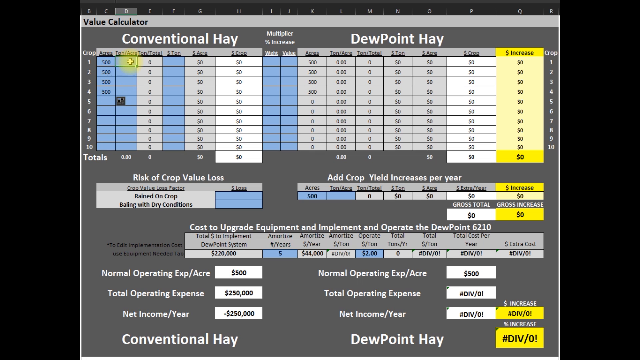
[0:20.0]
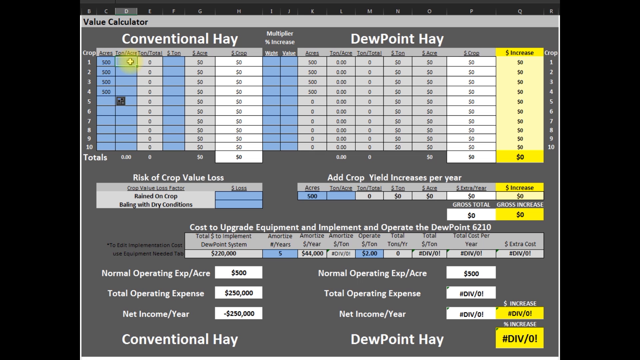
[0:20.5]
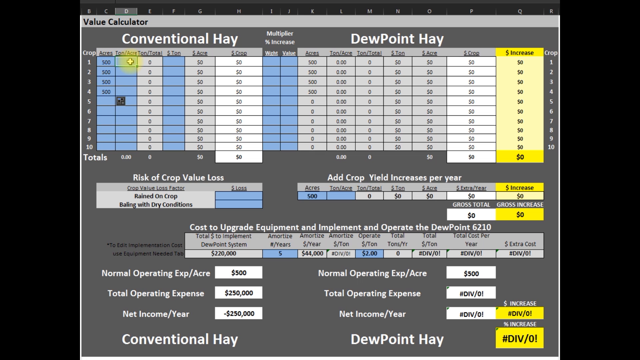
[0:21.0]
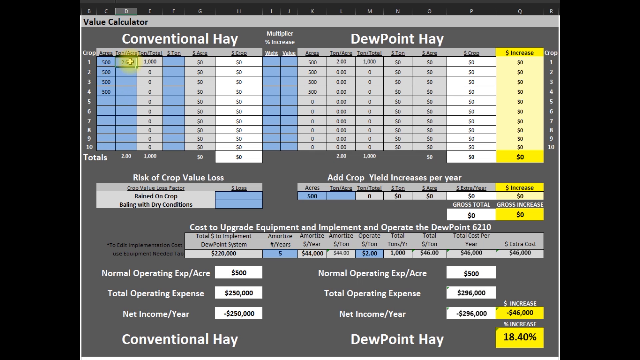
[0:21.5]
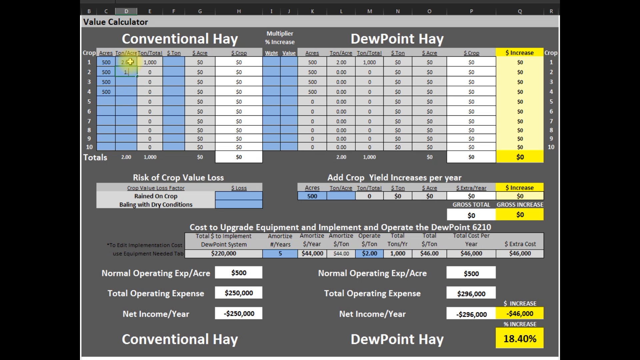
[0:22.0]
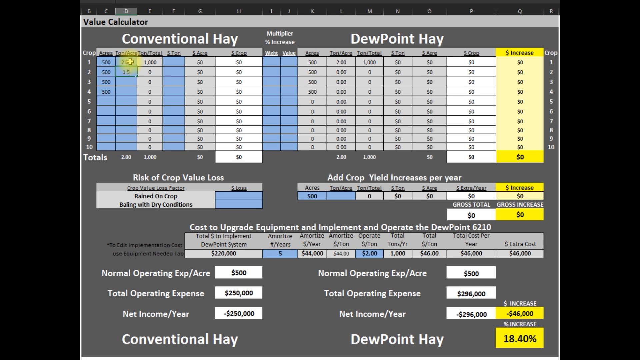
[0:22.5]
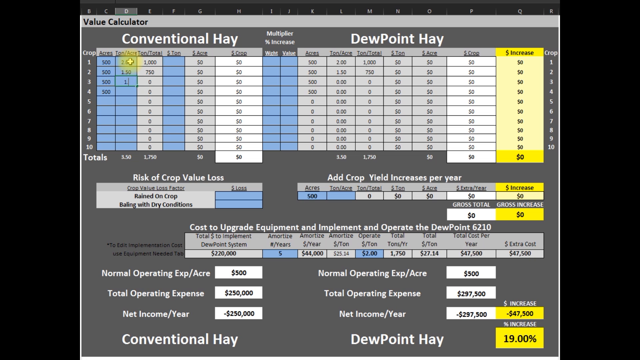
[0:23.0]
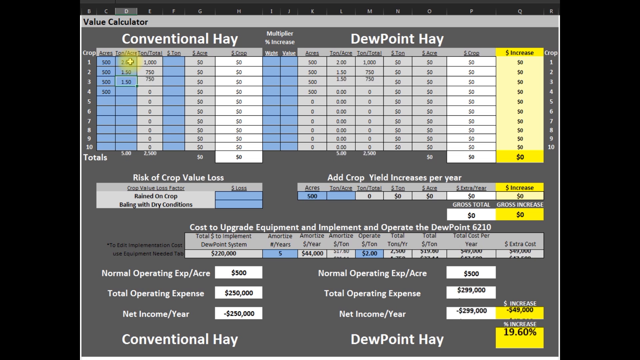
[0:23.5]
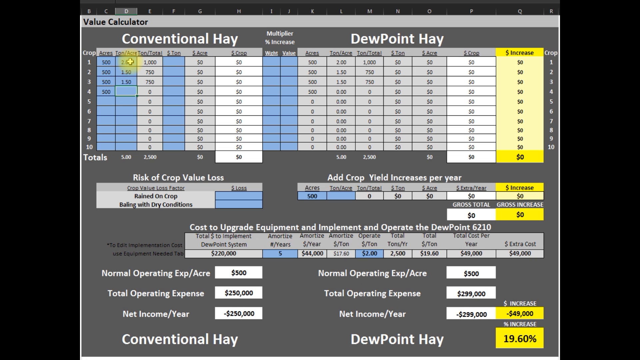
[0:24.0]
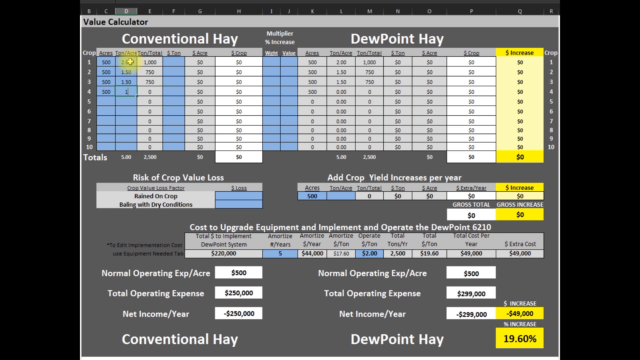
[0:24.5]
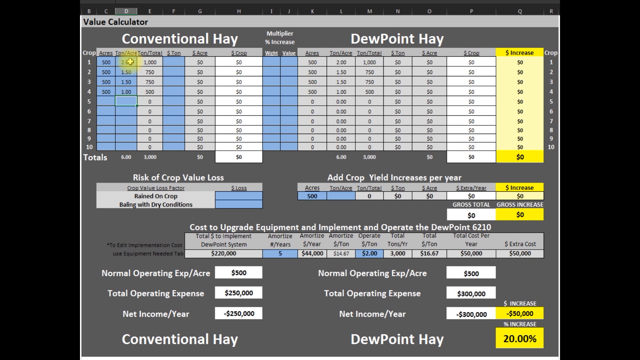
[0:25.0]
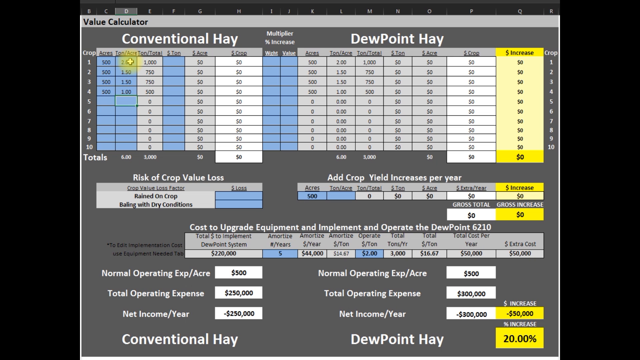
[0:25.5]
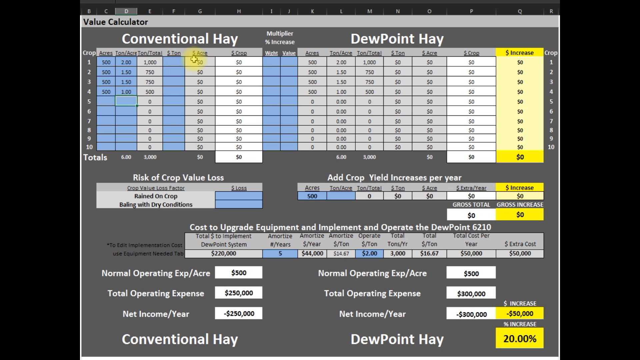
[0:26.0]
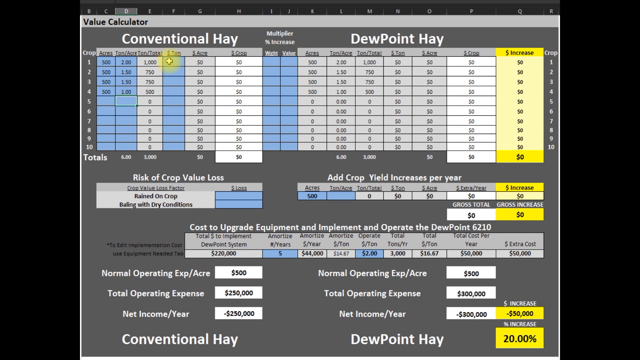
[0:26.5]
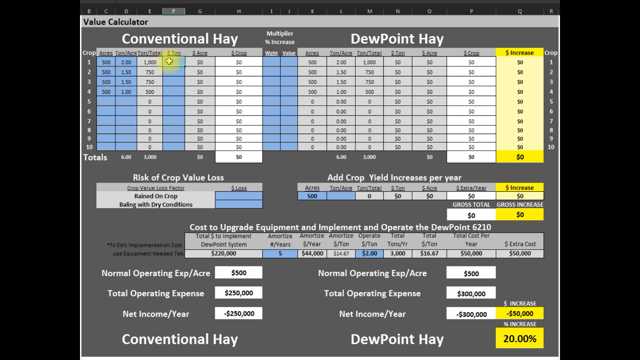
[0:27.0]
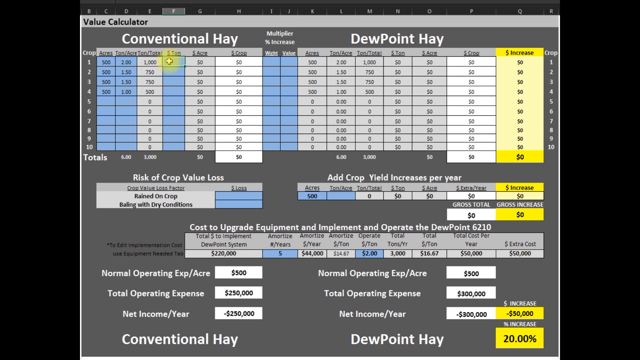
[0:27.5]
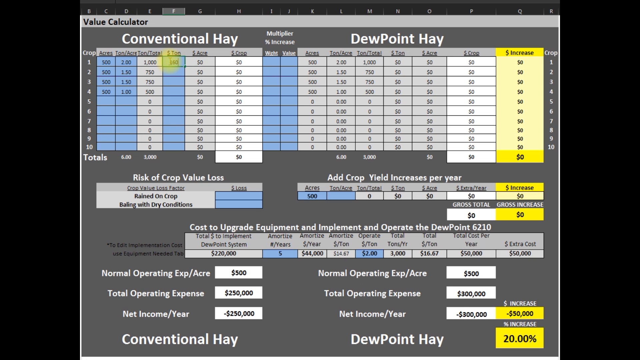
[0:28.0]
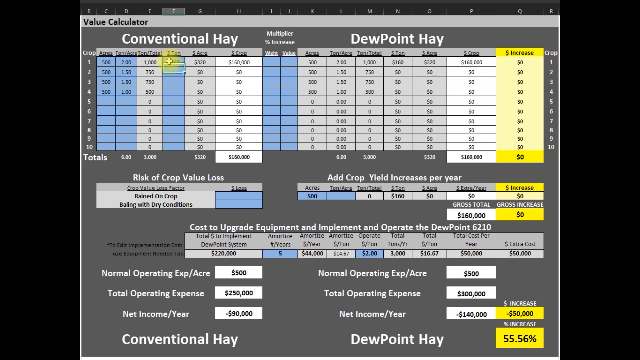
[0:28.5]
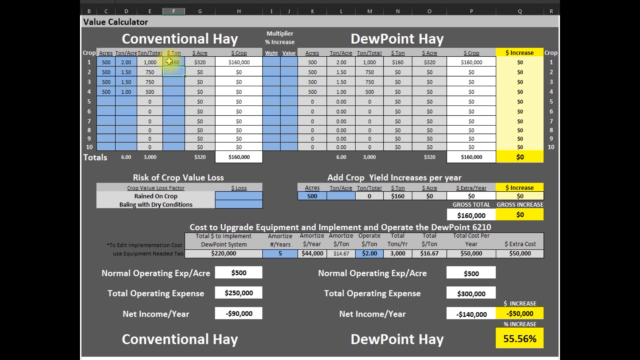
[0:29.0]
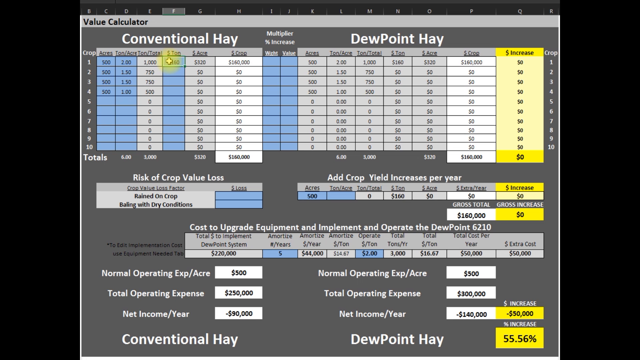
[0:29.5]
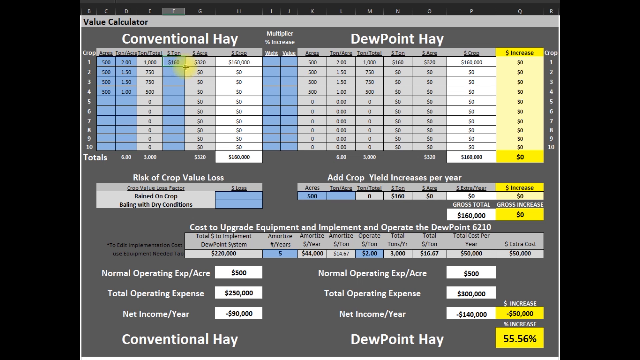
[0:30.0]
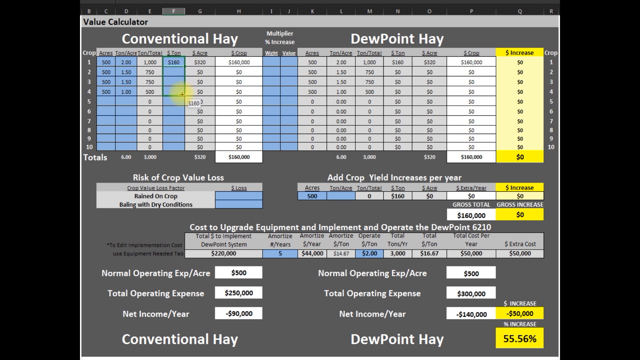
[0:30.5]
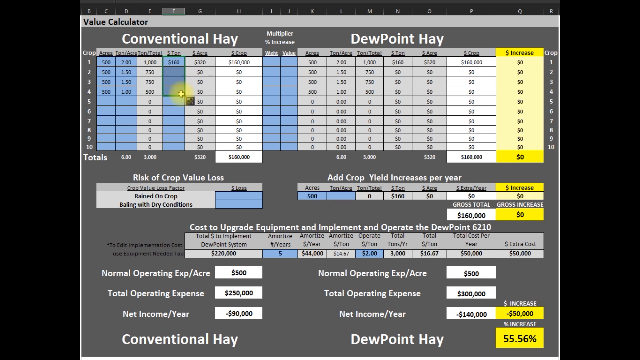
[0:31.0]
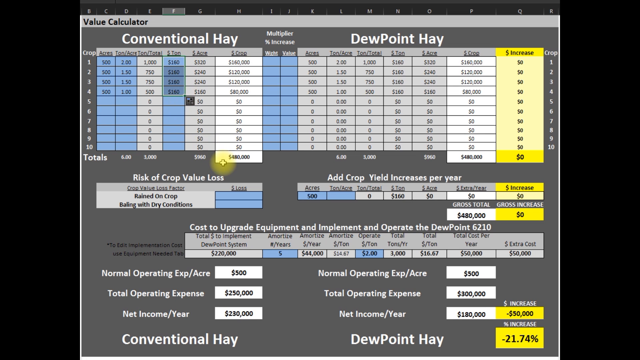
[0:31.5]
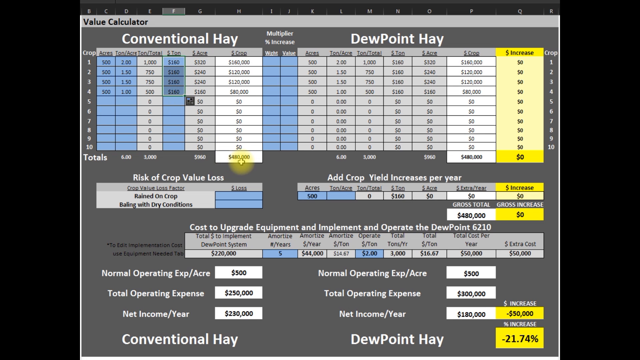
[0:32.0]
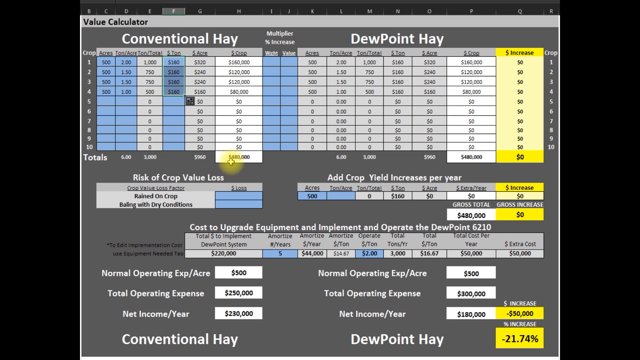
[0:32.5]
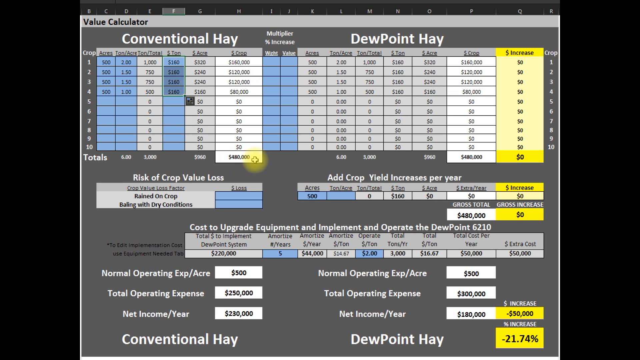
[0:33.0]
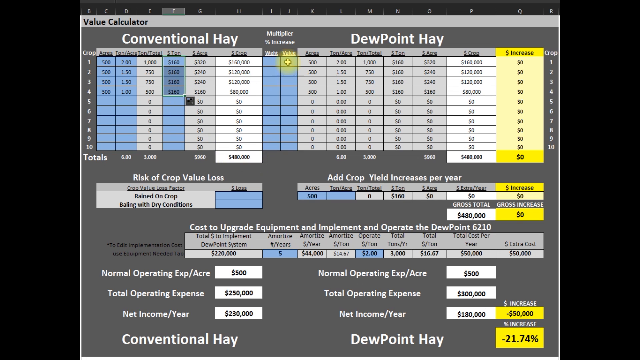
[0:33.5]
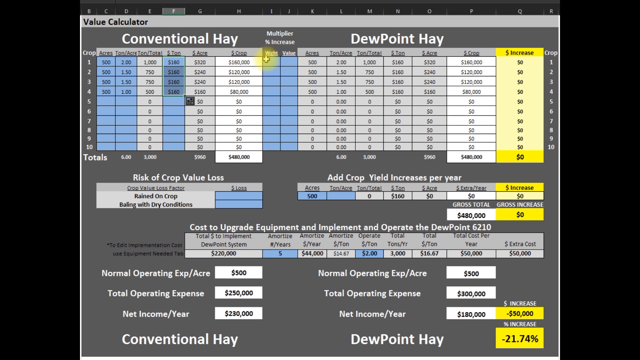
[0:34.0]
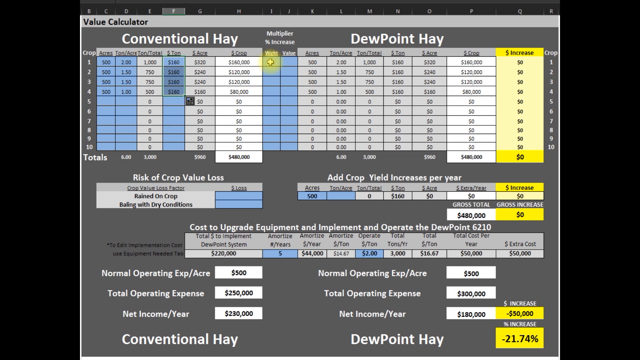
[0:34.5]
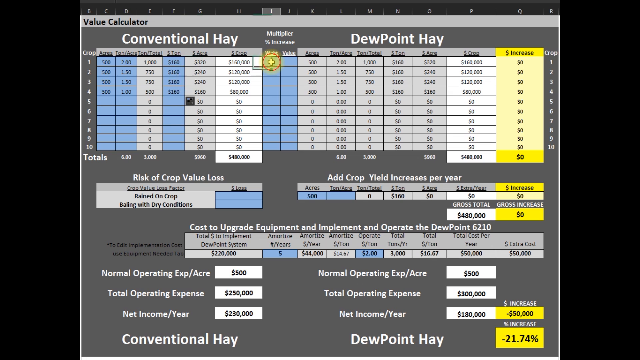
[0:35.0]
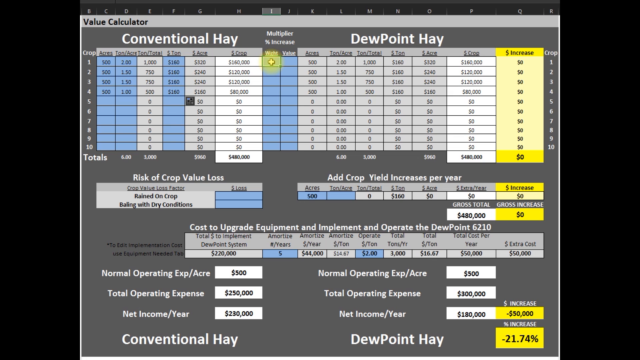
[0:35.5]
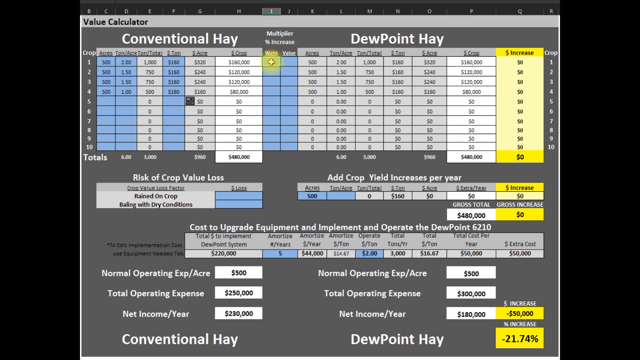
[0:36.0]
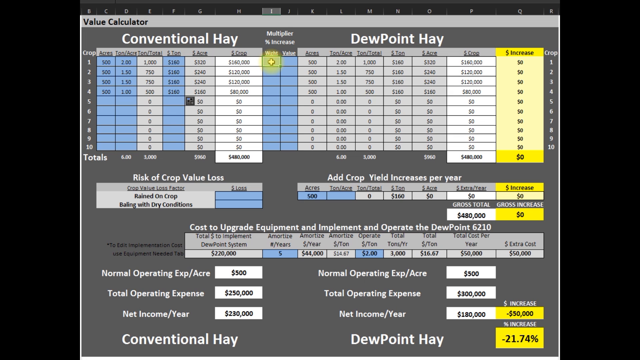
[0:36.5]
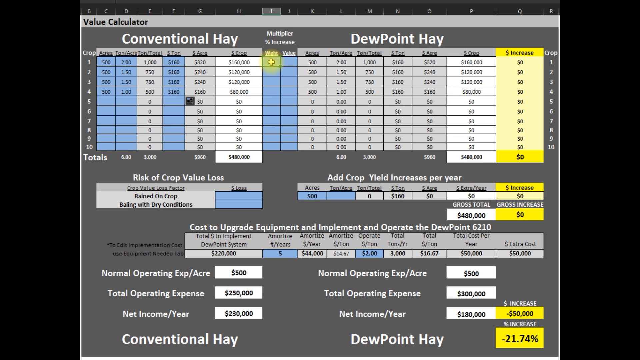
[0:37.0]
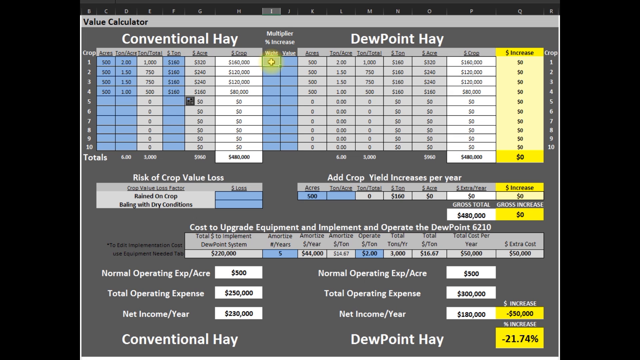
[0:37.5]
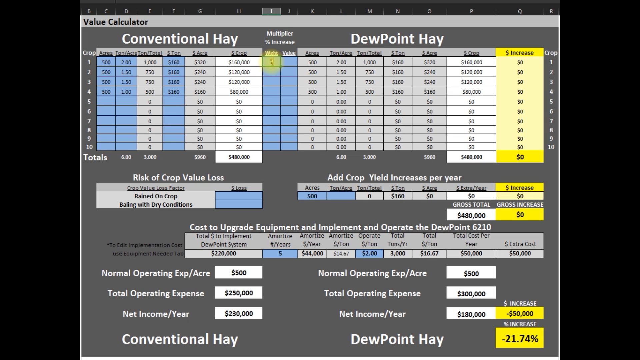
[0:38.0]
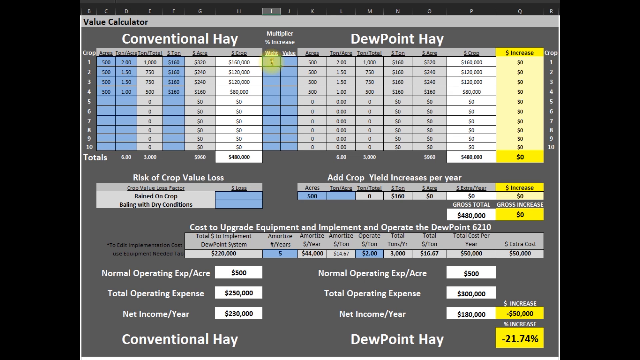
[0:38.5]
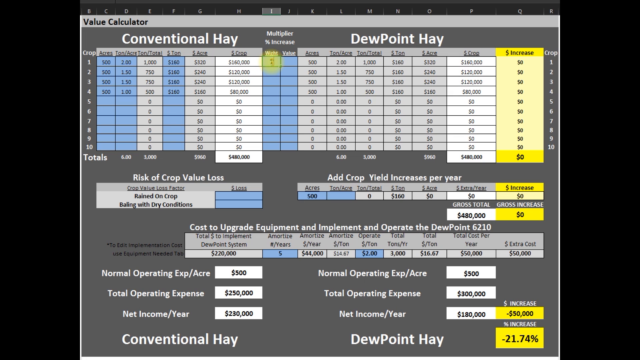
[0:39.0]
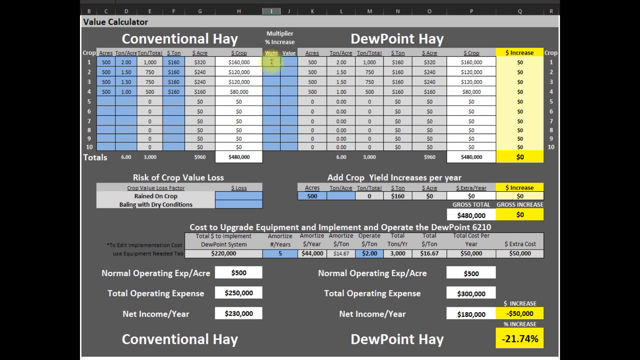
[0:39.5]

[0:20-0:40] "Value calculator" is written in black in the upper left-hand corner, and the sheet is divided into different sections. Of the two main sections, the person's mouse is on the first, on the left, which says "conventional hay" in white. On the other side, in white, it says "DEW point hay". Underneath the left section it says "risk of crop value loss", and underneath the first area on the right it says "add crop yield increases per year". Another section under both says "cost to upgrade equipment and implement and operate" DEW point, followed by what is either a euro sign or "6210". When the person clicks on one of the cells in the first row, the numbers change, and typing in a number changes many other numbers, suggesting the cells contain formulas. The sheet looks like Excel or something similar, but its lines are not green.